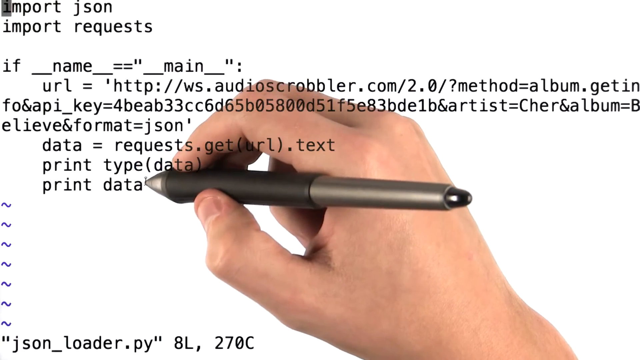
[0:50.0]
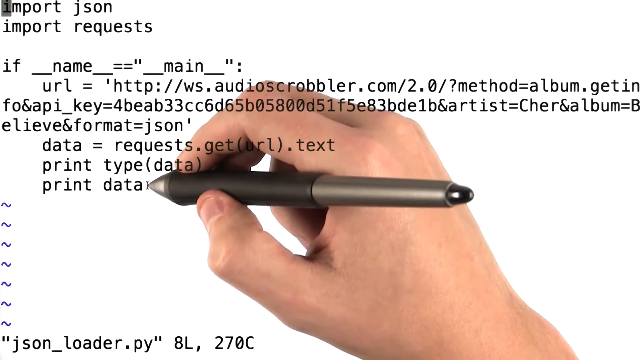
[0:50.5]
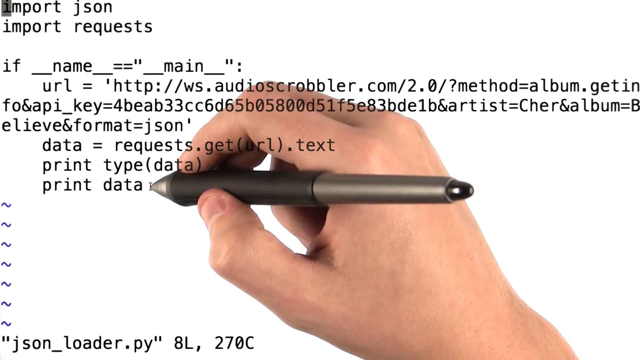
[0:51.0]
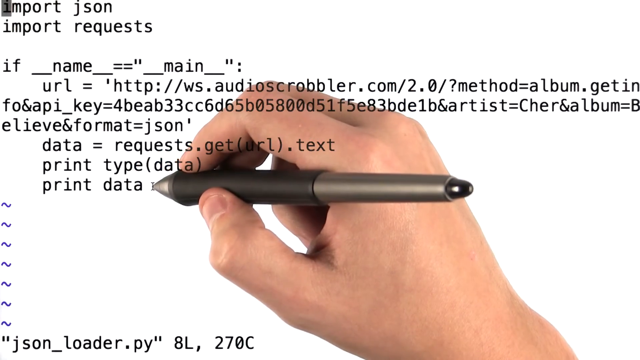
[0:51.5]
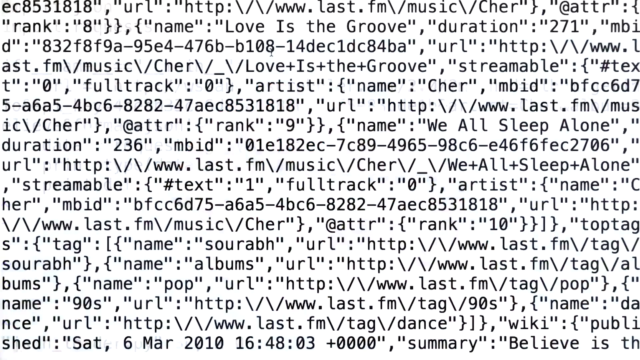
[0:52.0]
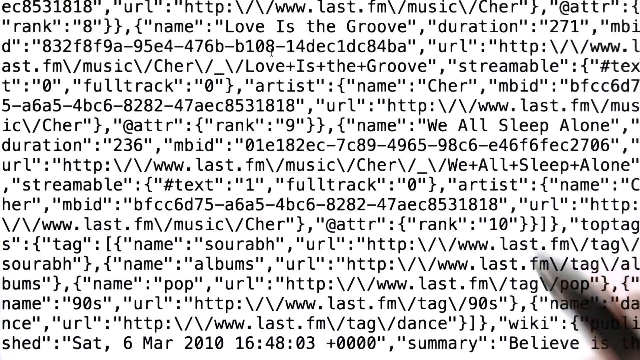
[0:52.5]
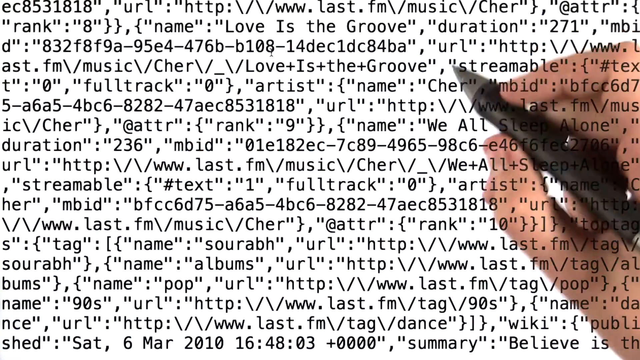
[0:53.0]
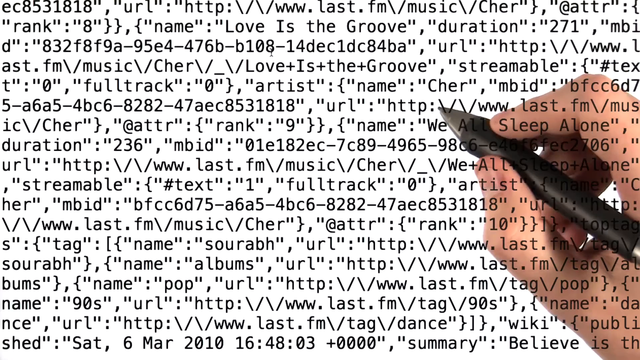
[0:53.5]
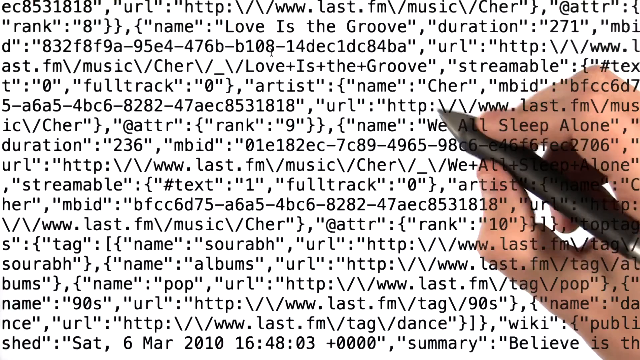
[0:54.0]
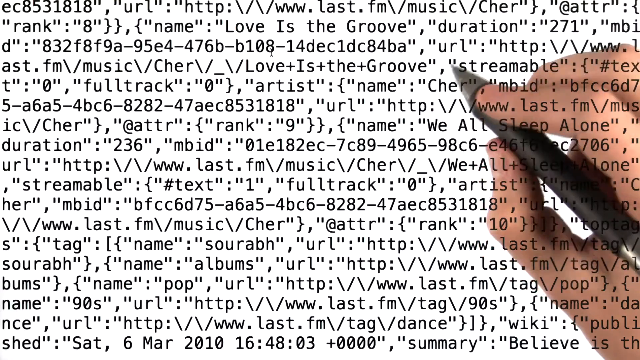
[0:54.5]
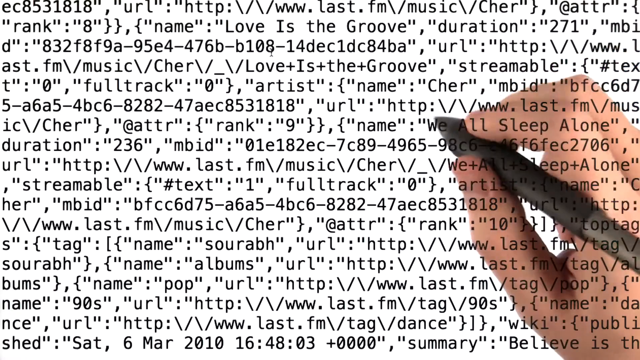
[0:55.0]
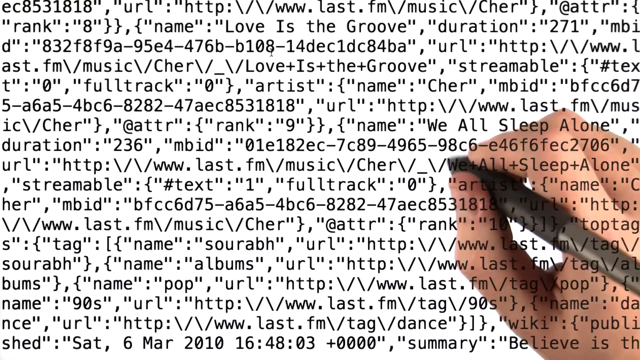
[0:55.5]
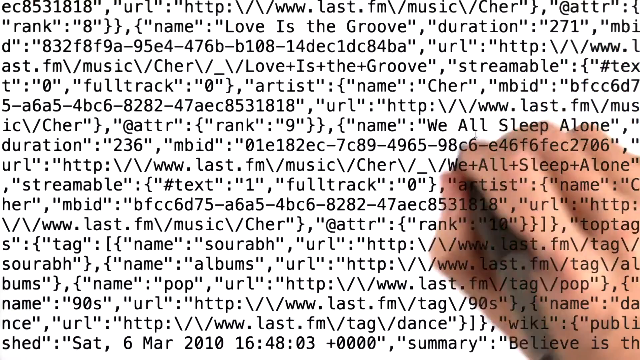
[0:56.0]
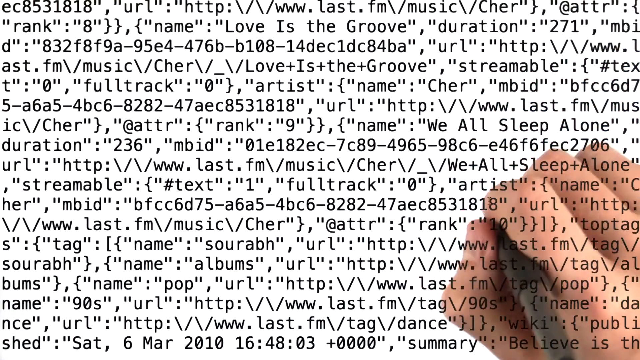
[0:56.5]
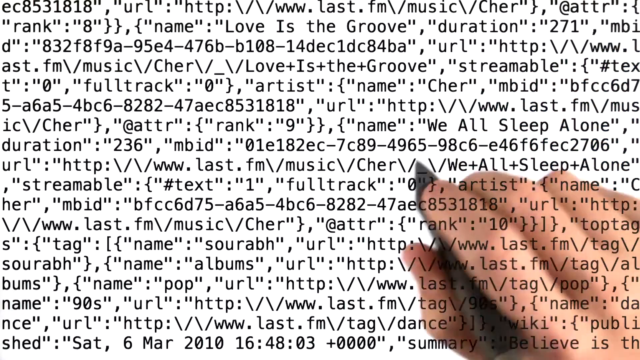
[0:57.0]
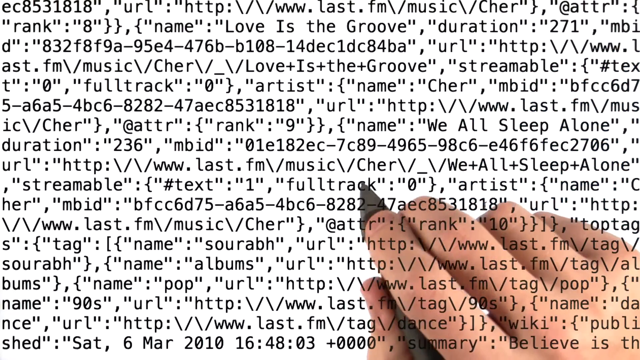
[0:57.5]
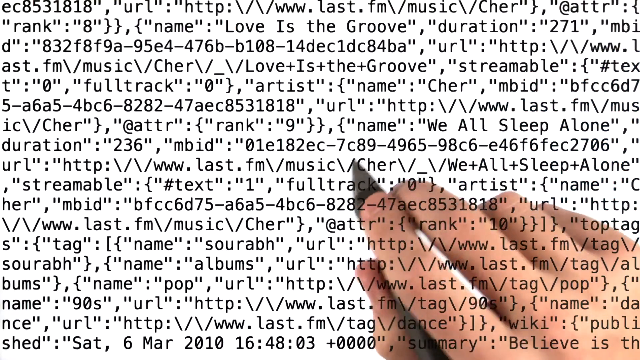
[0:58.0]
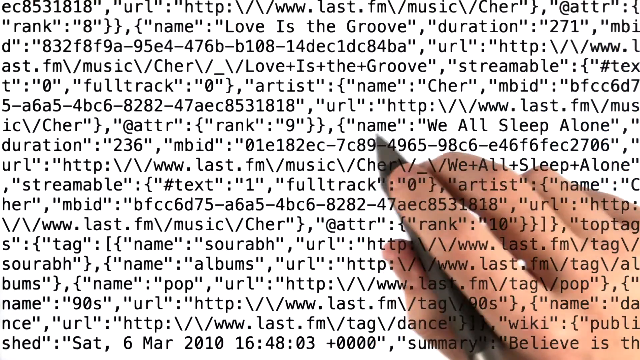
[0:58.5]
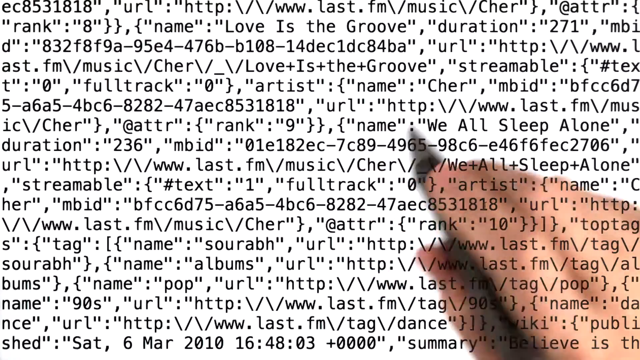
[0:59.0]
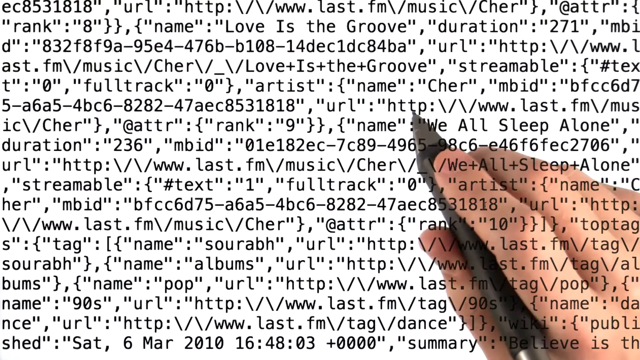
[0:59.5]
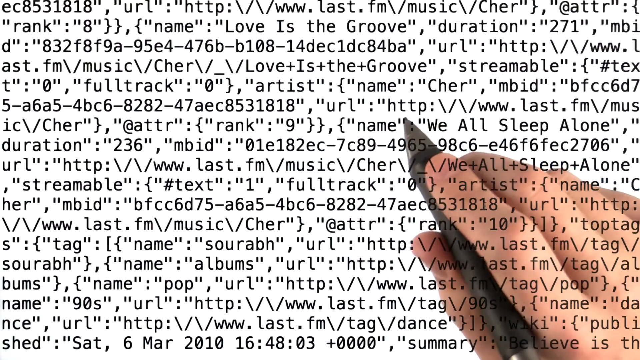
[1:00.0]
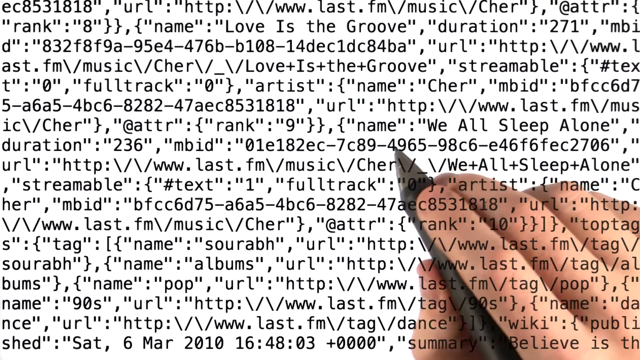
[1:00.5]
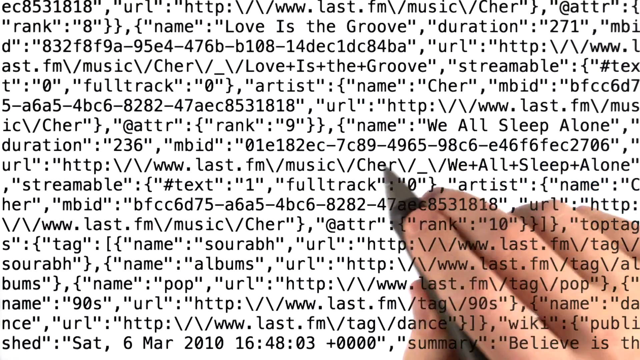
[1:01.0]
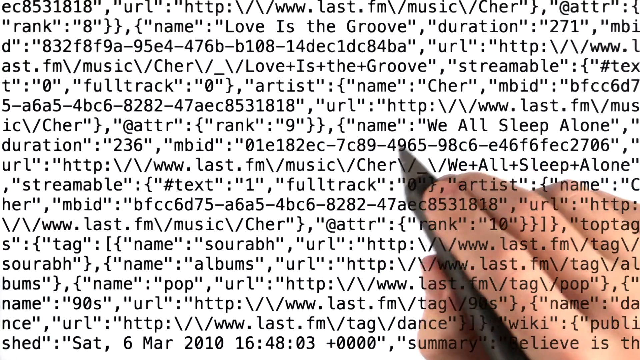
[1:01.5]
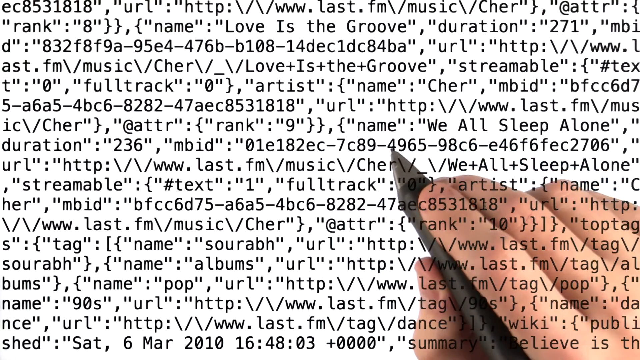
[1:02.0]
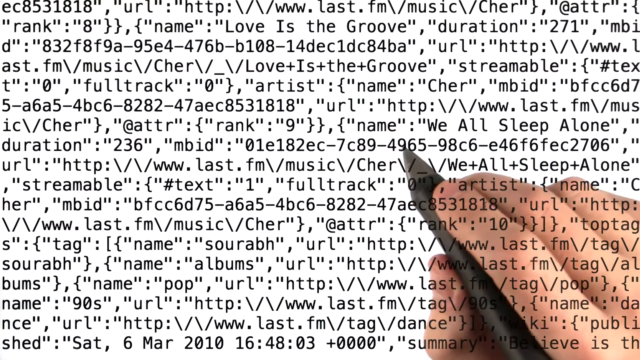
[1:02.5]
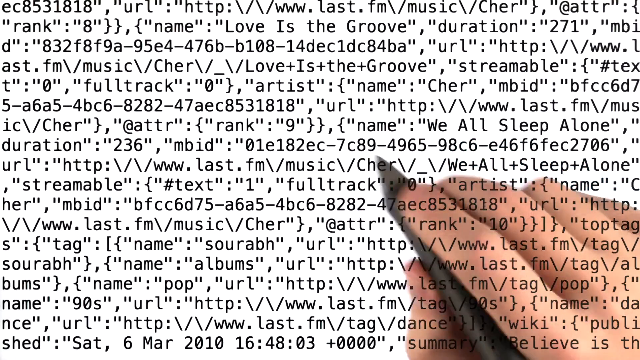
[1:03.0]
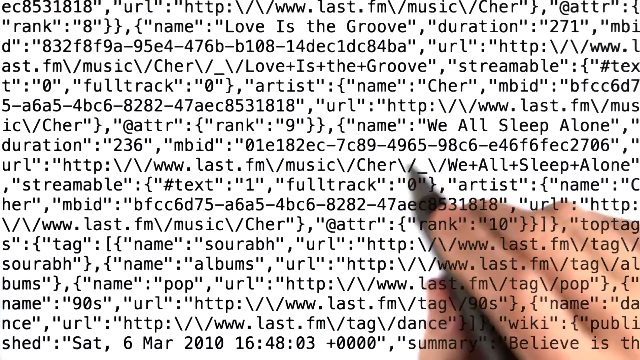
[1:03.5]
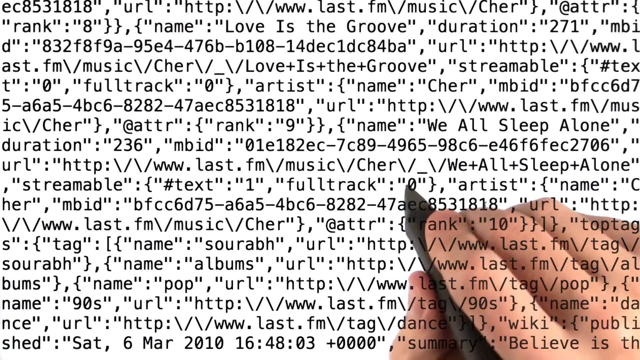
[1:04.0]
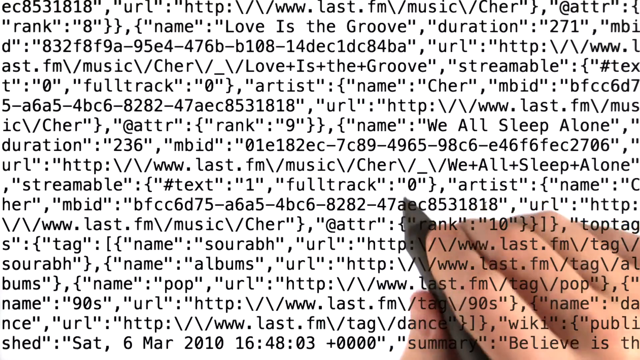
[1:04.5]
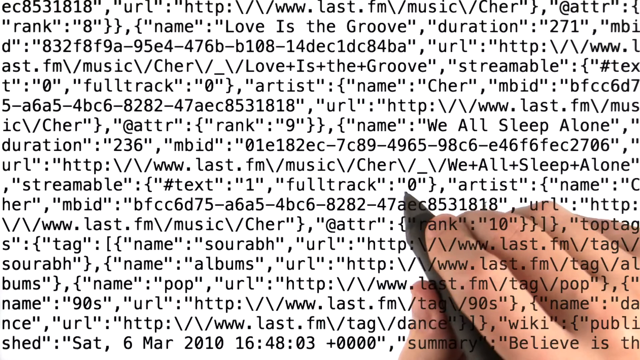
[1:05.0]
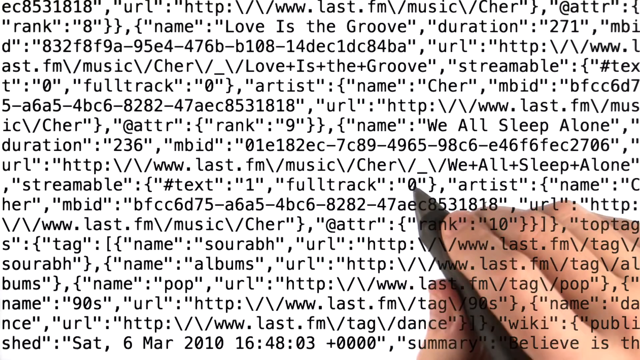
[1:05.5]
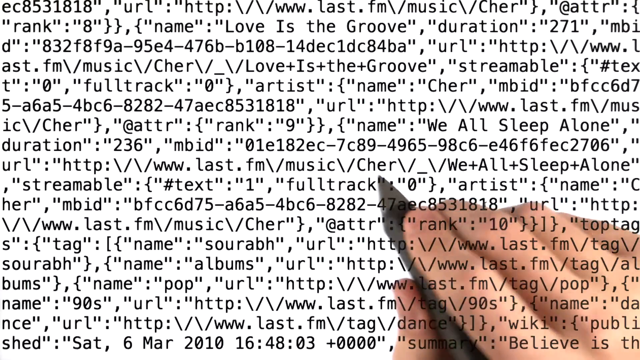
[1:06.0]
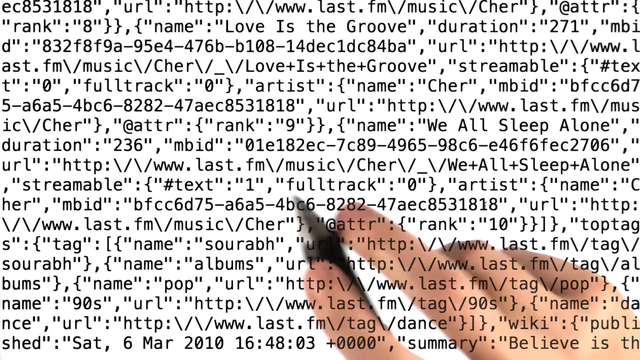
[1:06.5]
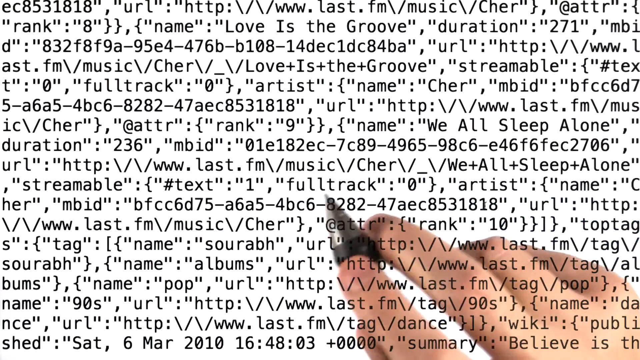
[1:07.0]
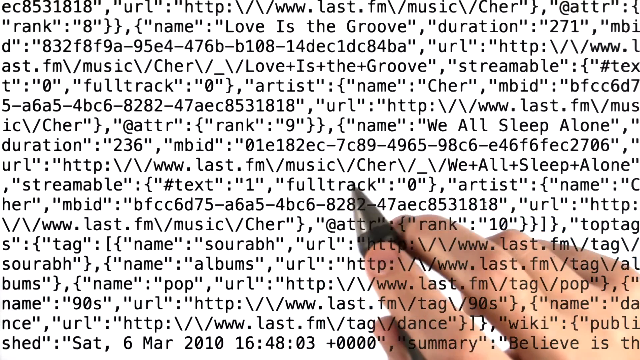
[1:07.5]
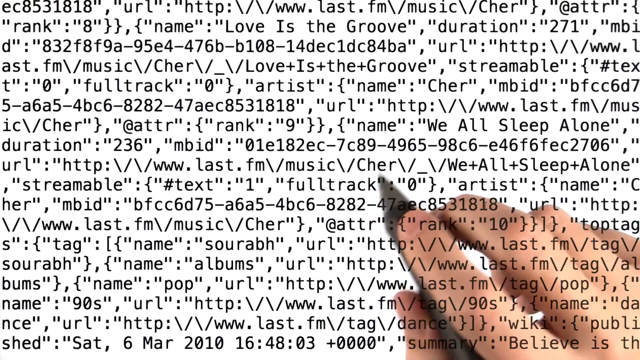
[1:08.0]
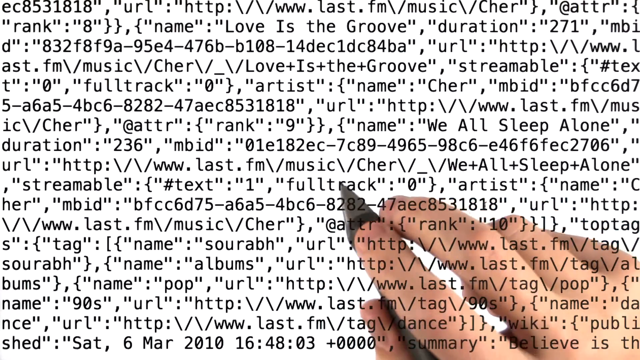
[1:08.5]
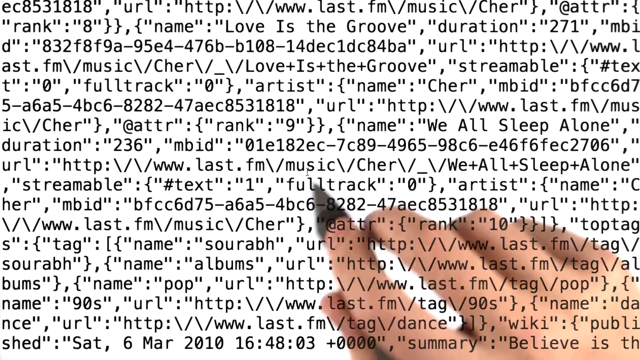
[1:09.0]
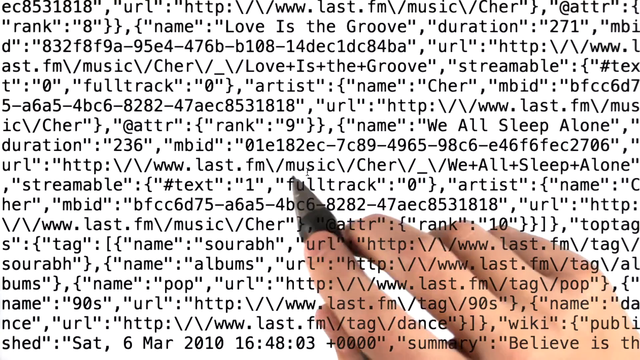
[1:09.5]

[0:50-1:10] The author is in the middle of writing code that begins with import JSON lines, an "if name equals main" line and a URL, set up to get album and artist information in JSON, request the URL text and print that text. The author's hand can be seen, presumably walking through the steps. The scene changes and the whole page is covered with code, line after line, with names of artists throughout. It looks to be the URLs, artists and other gathered information printed out in one large text.